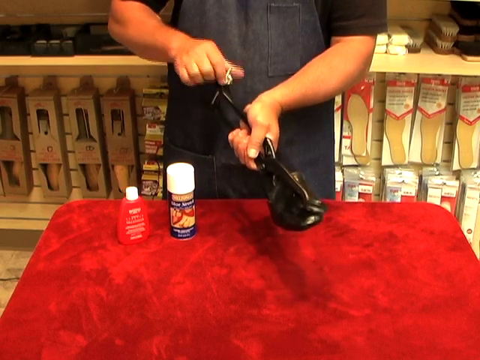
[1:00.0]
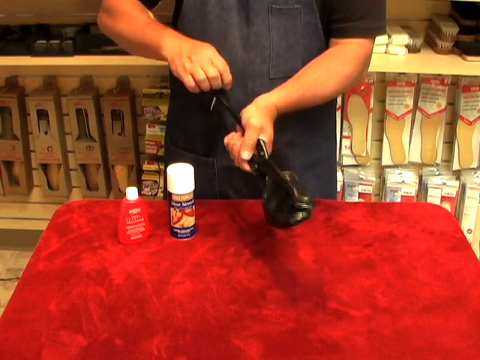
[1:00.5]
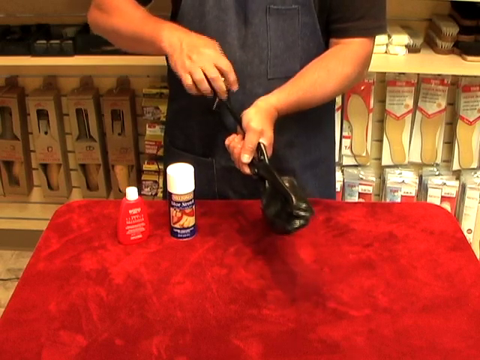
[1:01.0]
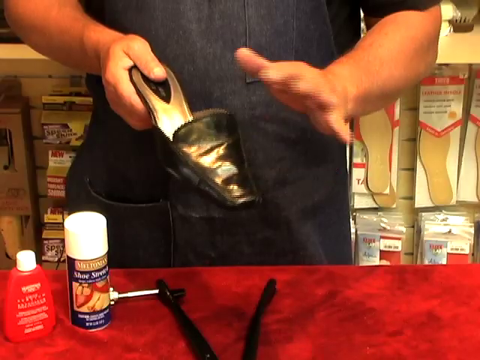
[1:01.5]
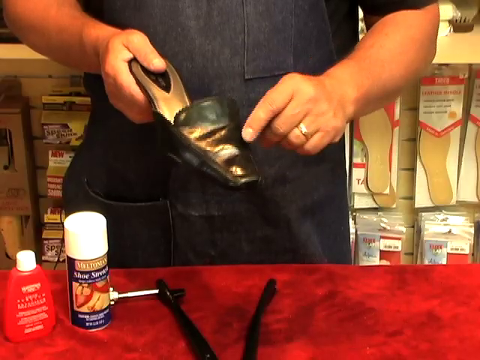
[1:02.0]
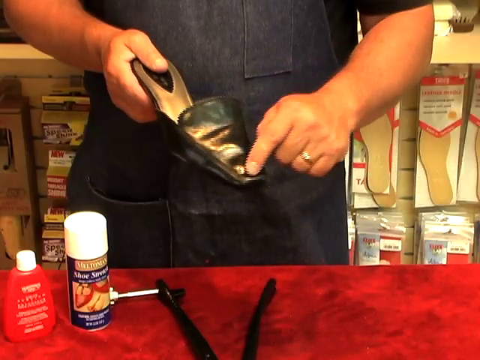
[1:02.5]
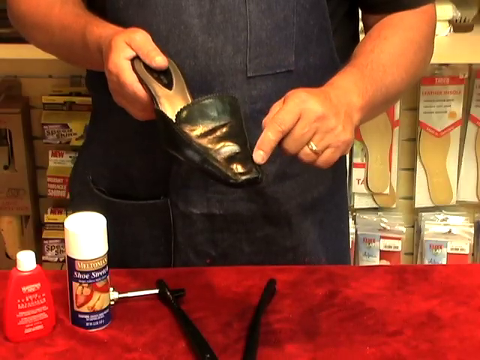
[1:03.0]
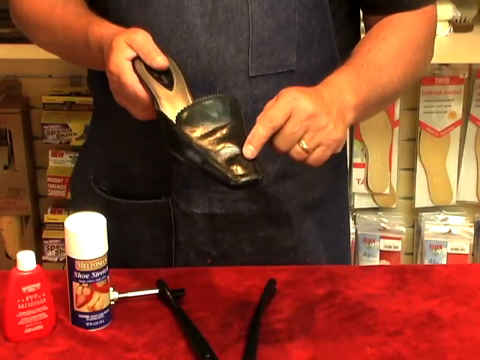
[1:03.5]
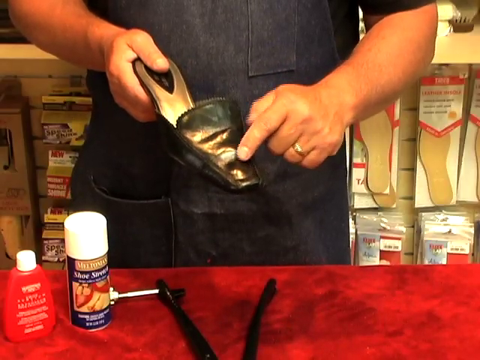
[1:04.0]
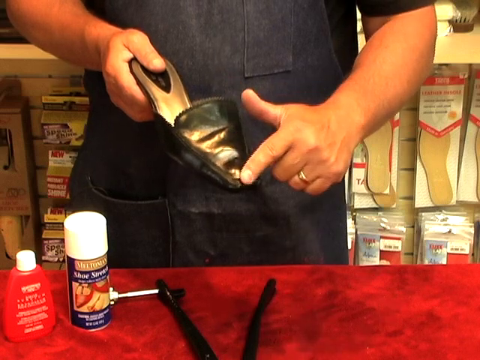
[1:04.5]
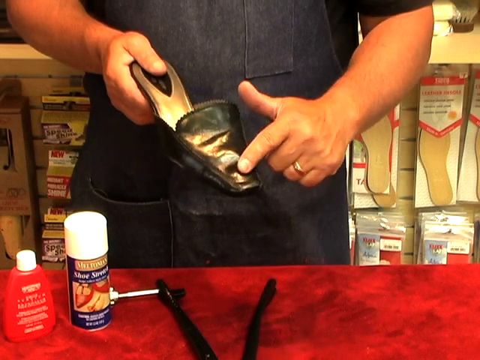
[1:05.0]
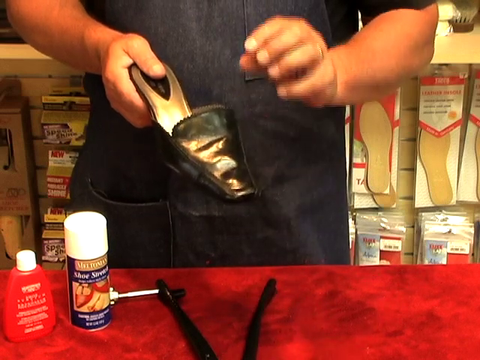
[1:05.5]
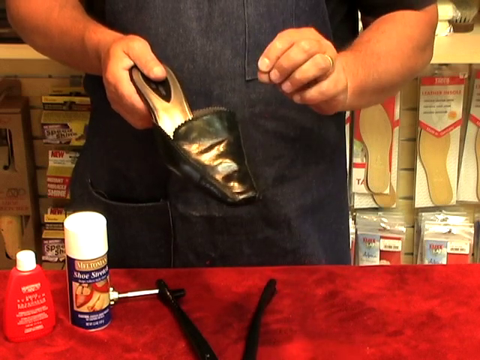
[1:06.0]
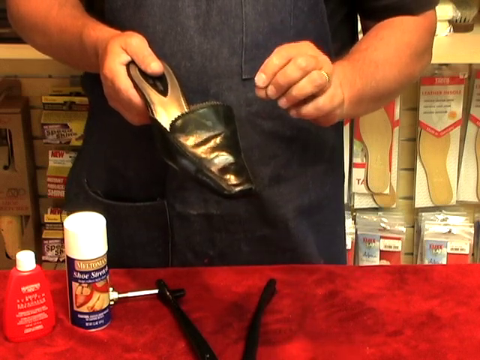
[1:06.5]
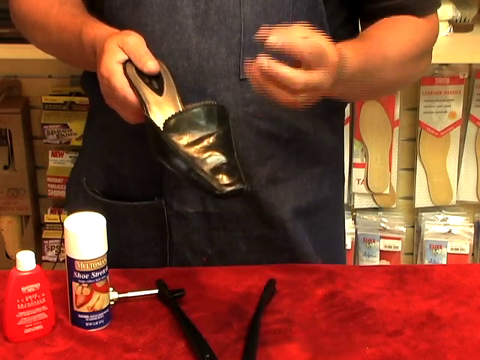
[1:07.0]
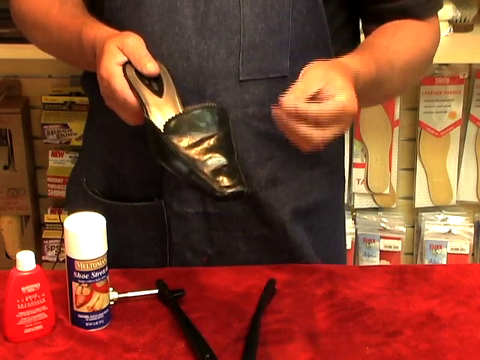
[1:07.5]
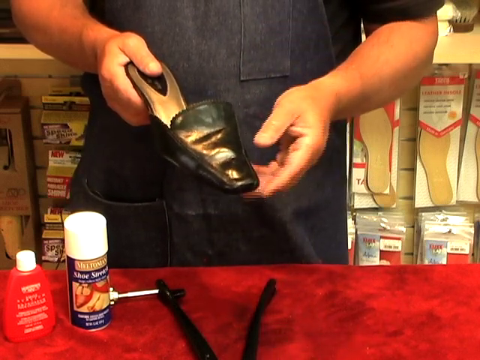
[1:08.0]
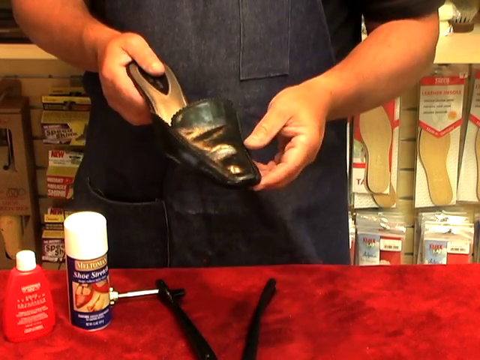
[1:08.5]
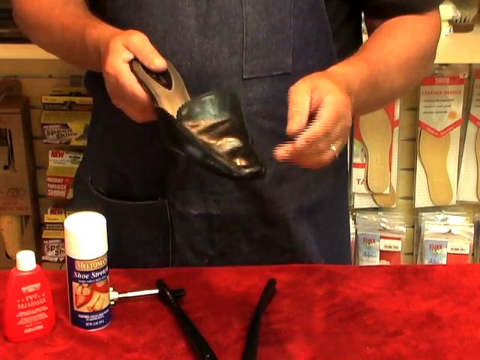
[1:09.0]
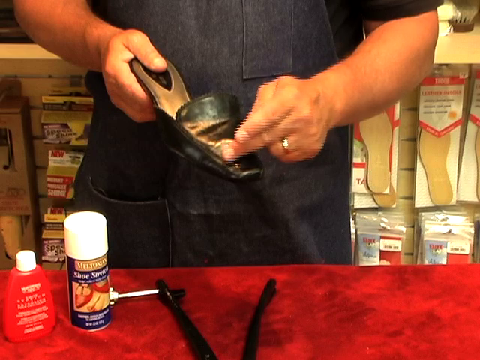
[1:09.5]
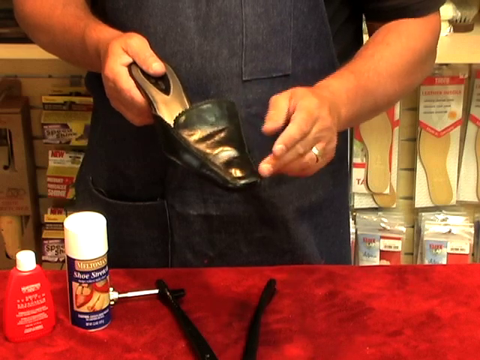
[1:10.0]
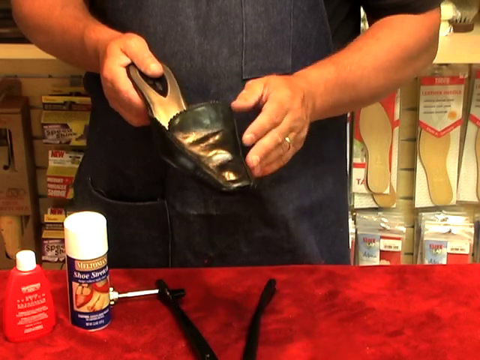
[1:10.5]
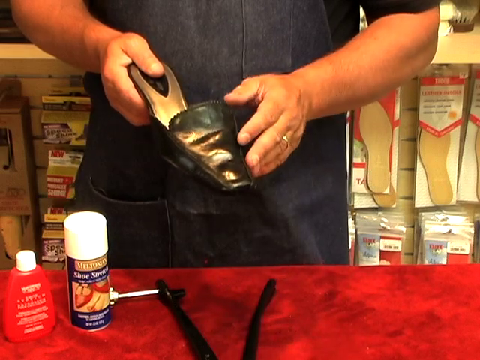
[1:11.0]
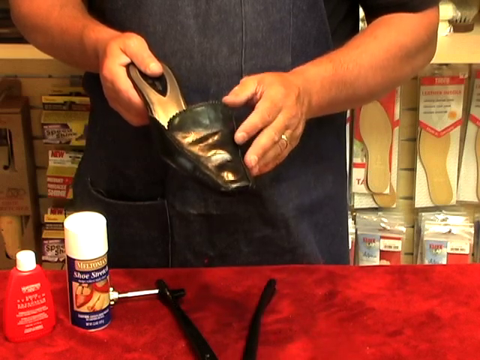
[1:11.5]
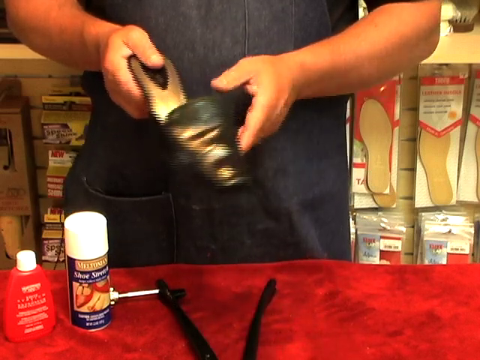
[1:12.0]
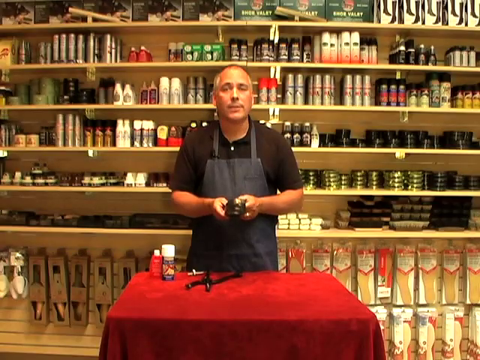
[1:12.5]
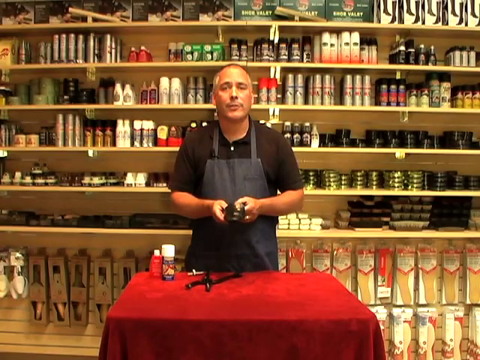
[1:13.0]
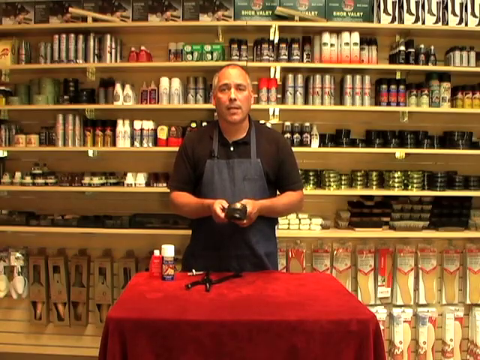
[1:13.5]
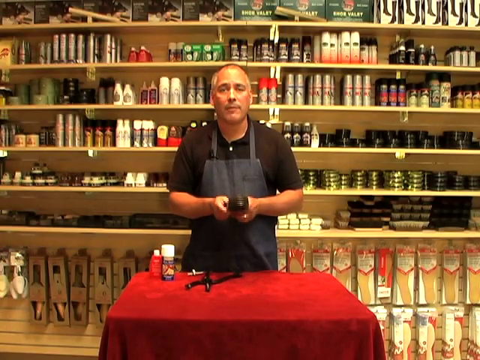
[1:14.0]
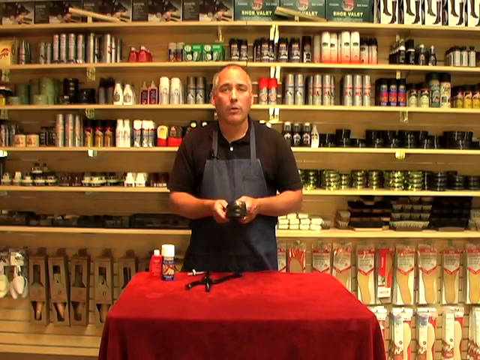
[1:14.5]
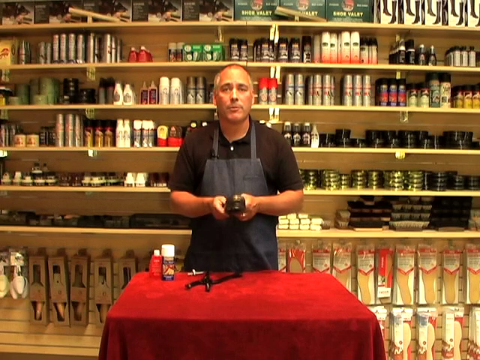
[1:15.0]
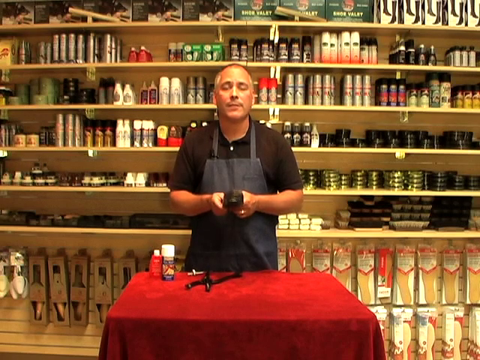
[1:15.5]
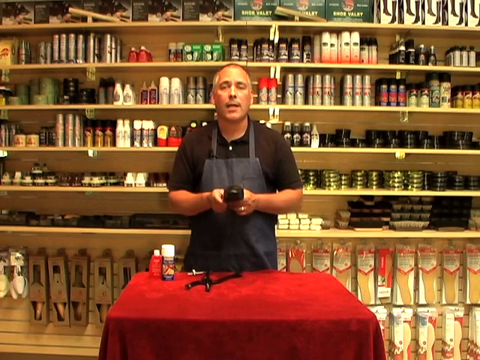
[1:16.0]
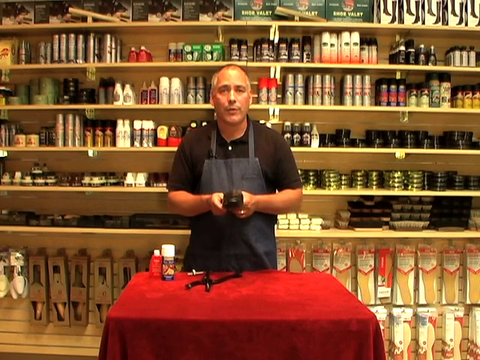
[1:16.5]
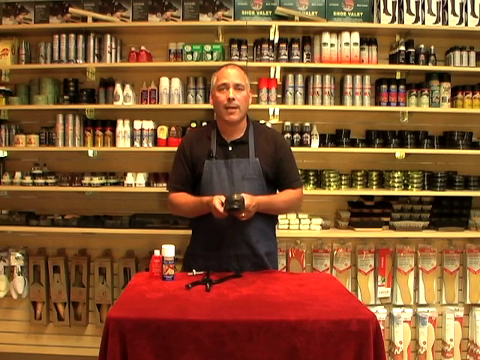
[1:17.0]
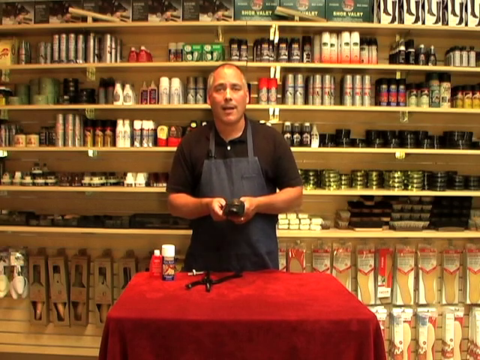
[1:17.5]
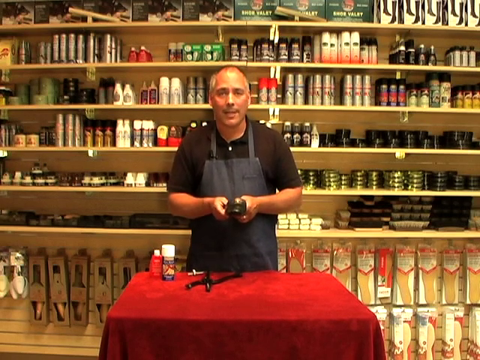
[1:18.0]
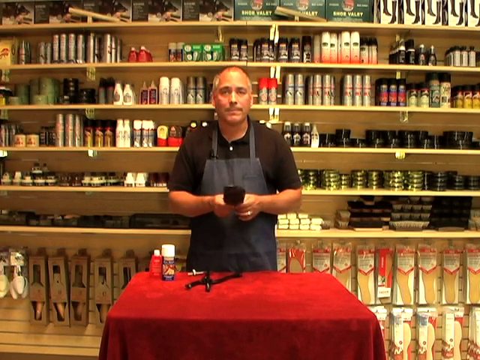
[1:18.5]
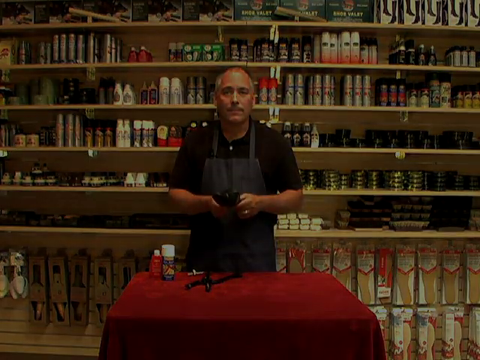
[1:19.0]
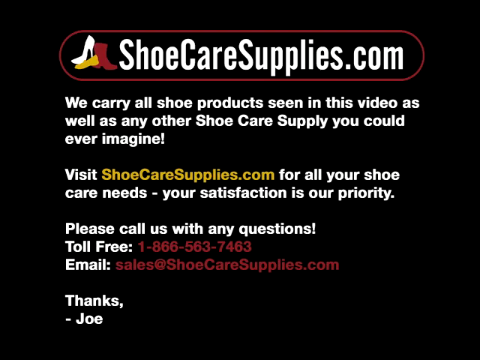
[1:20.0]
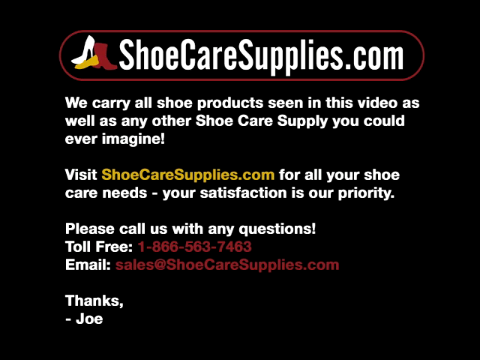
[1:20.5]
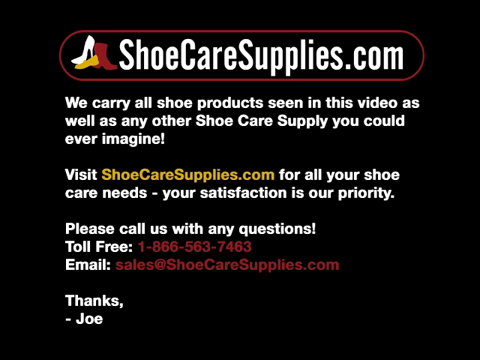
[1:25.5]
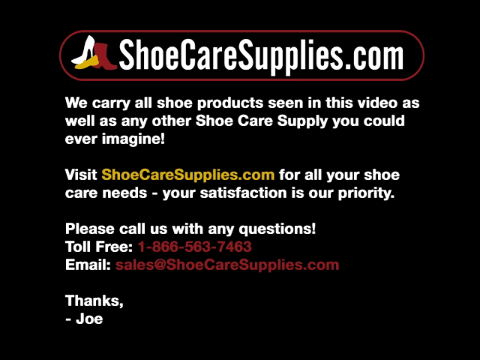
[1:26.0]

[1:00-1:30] In the background, boxes are neatly placed on white shelves. On the second shelf are brushes: one has a brown wooden part and a white part, another has brown wood, and there is a black brush. The man is of advanced age, around 50-something. He holds something black and adjusts it using adjusting levers. Before him is a red table, and on top of it is a blue container with red and white writing and a white top, which the man adjusts. In his left hand is a ring.